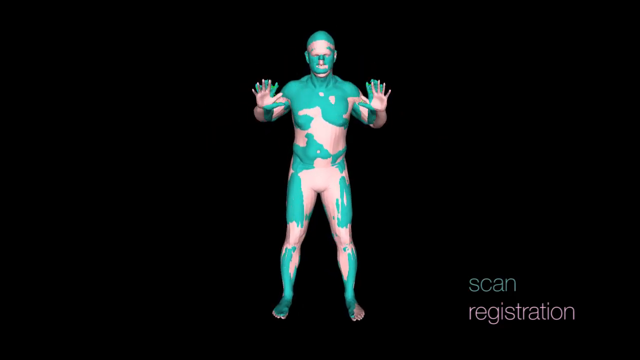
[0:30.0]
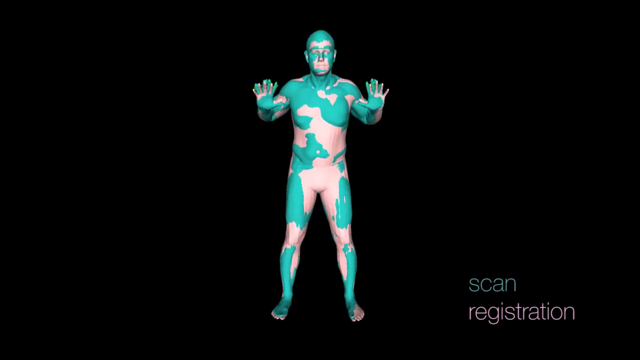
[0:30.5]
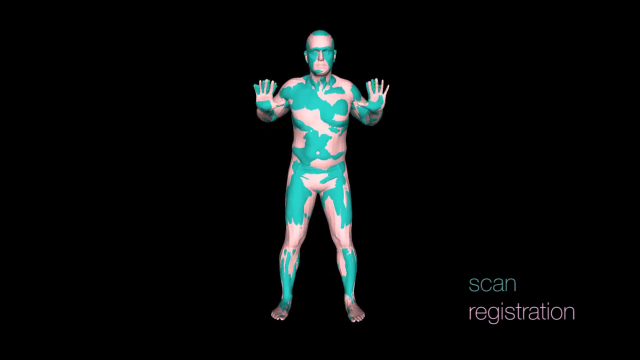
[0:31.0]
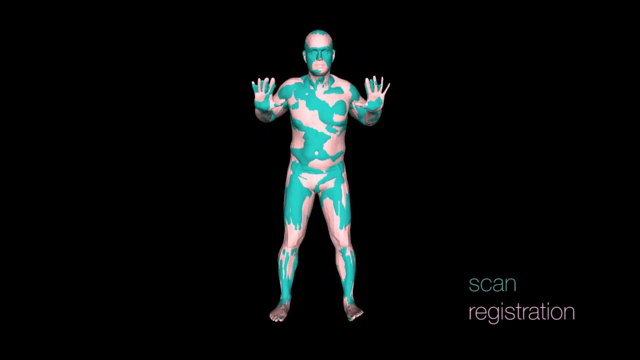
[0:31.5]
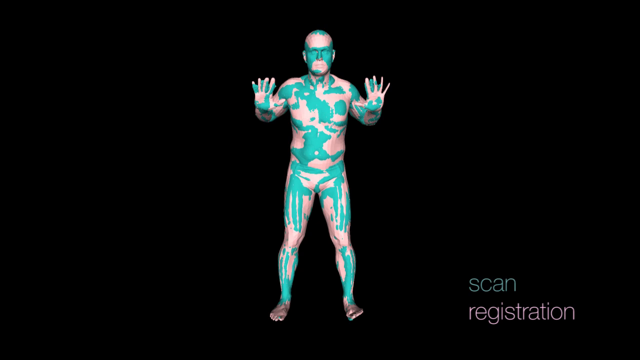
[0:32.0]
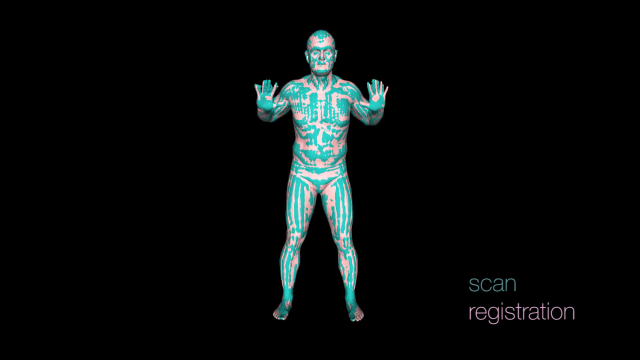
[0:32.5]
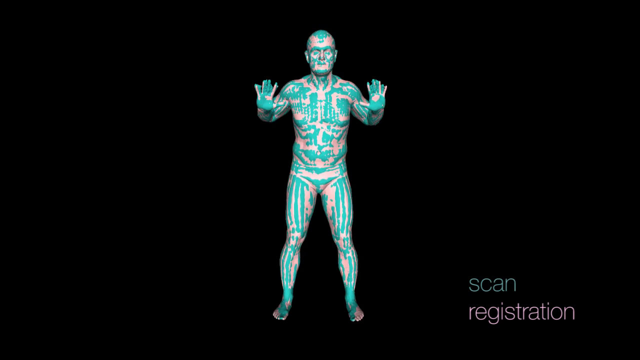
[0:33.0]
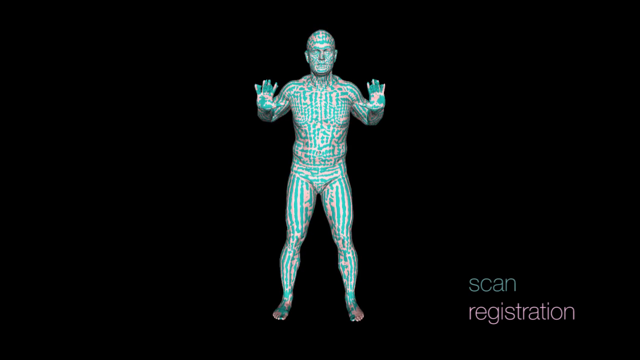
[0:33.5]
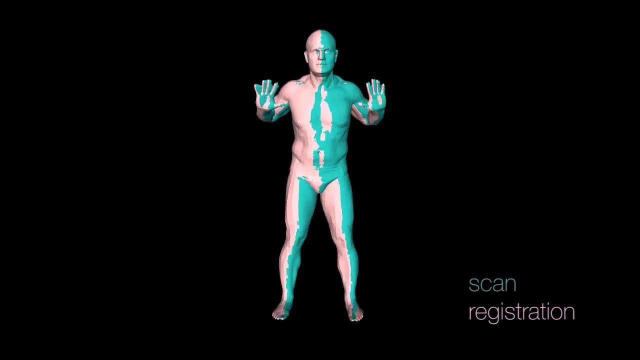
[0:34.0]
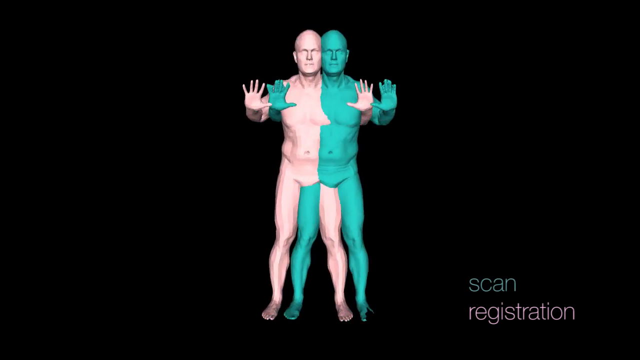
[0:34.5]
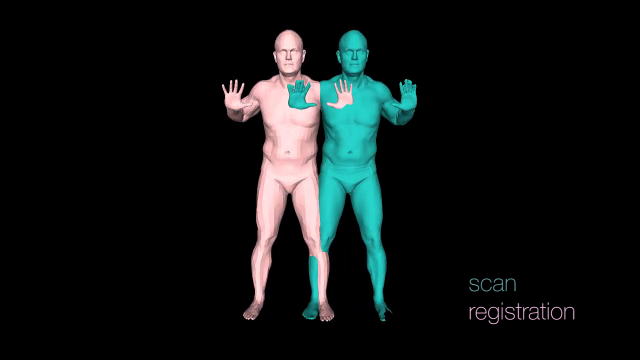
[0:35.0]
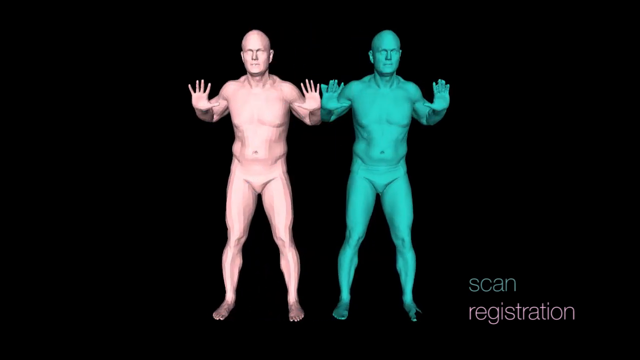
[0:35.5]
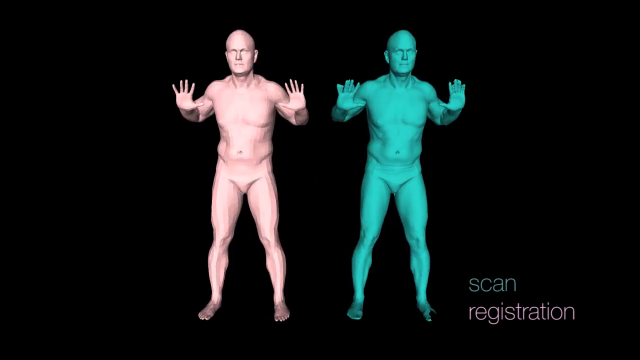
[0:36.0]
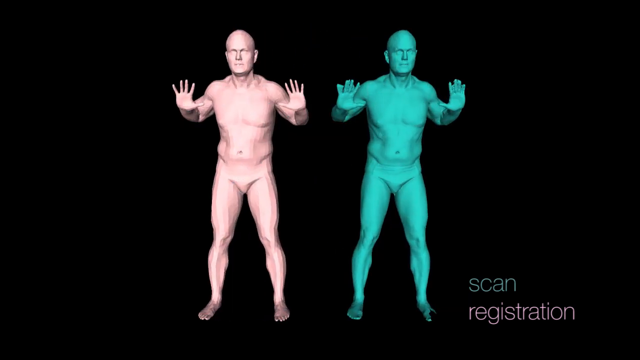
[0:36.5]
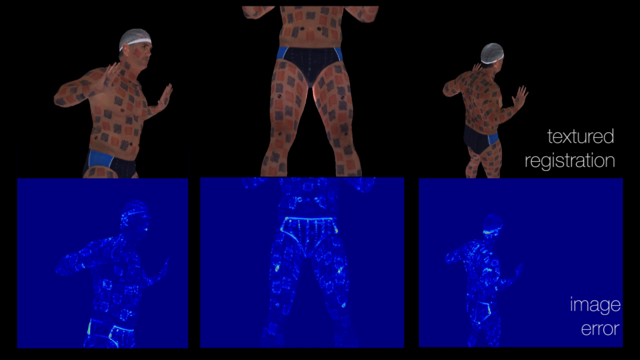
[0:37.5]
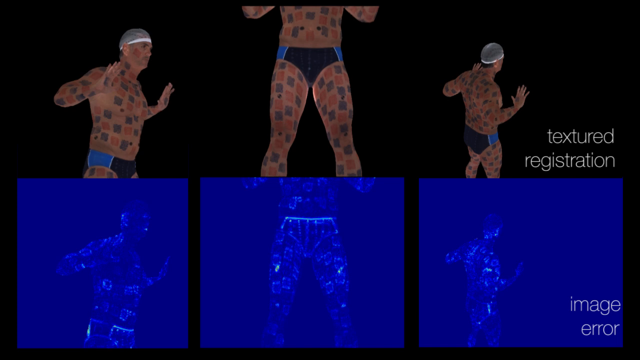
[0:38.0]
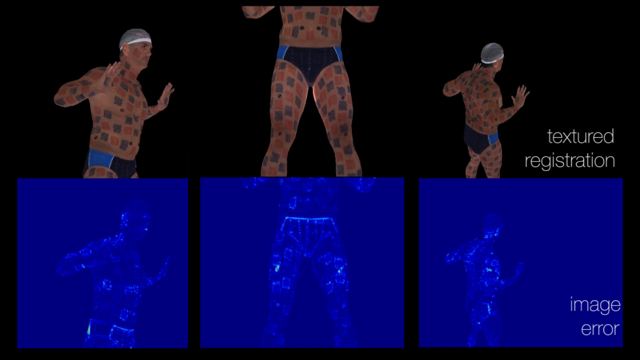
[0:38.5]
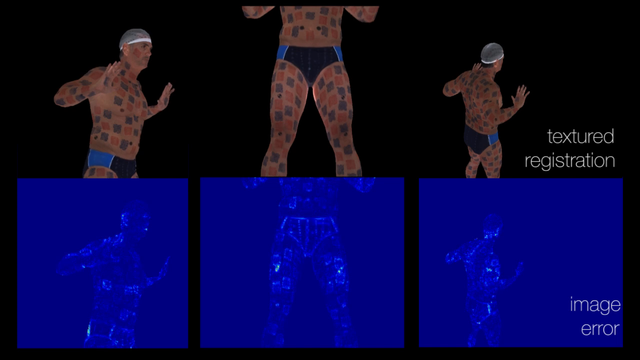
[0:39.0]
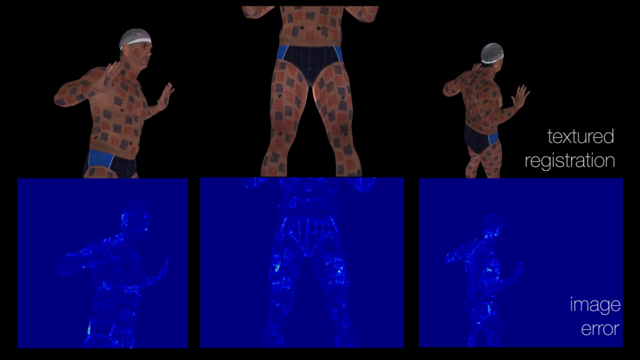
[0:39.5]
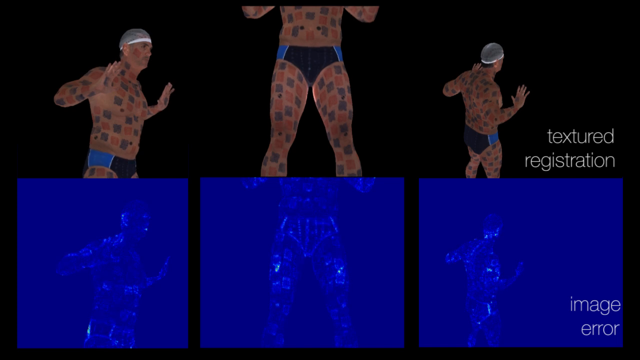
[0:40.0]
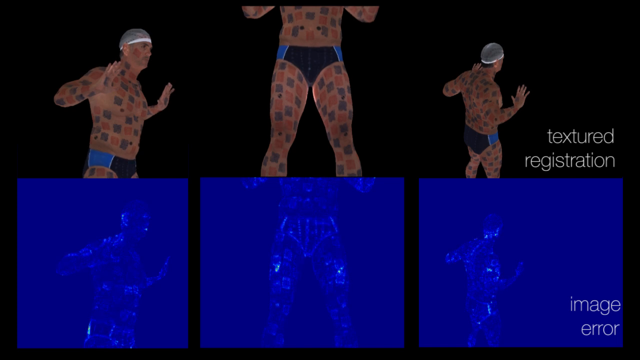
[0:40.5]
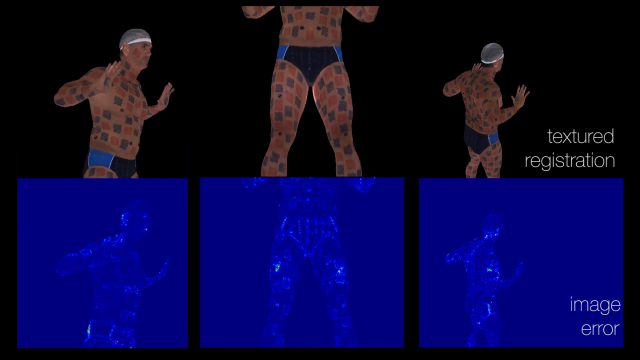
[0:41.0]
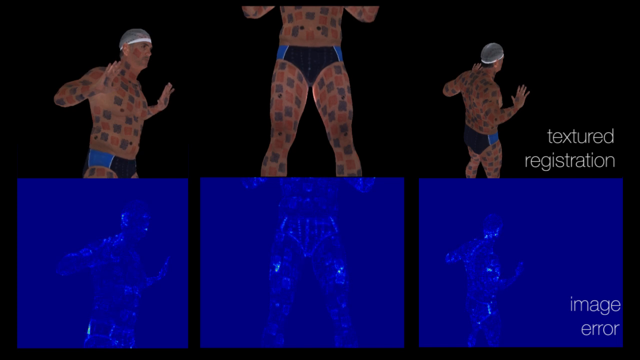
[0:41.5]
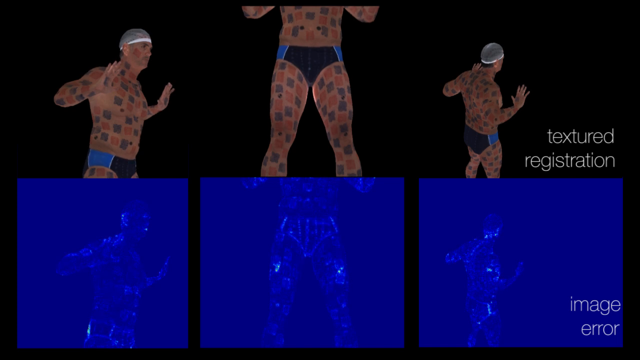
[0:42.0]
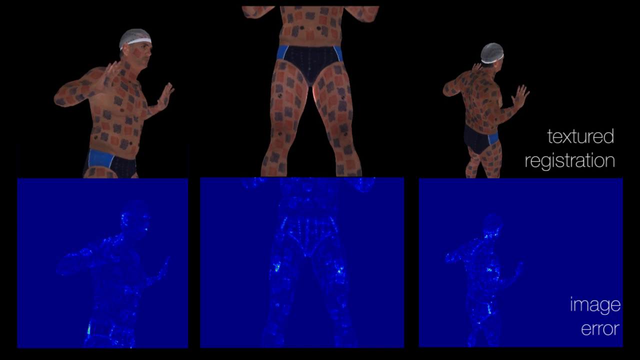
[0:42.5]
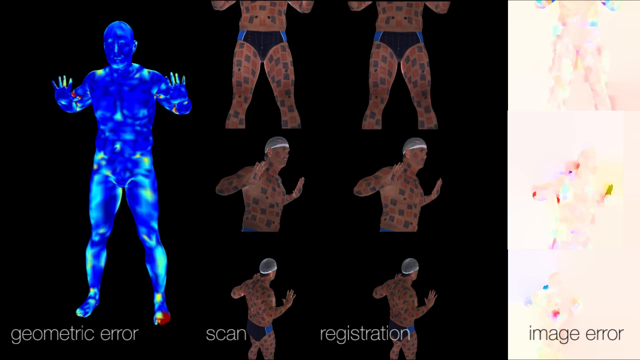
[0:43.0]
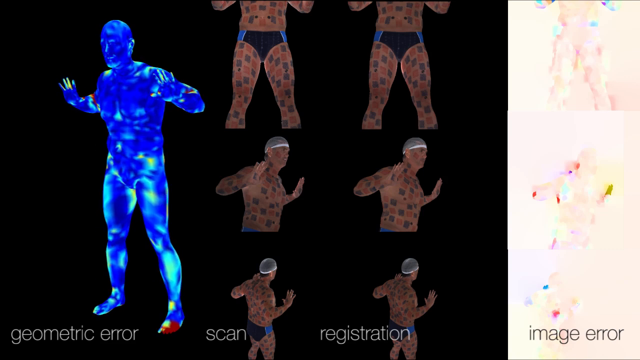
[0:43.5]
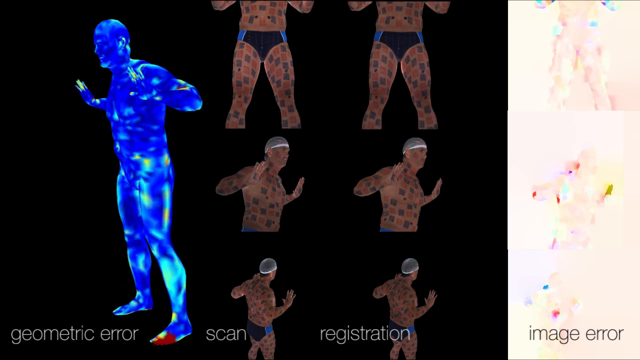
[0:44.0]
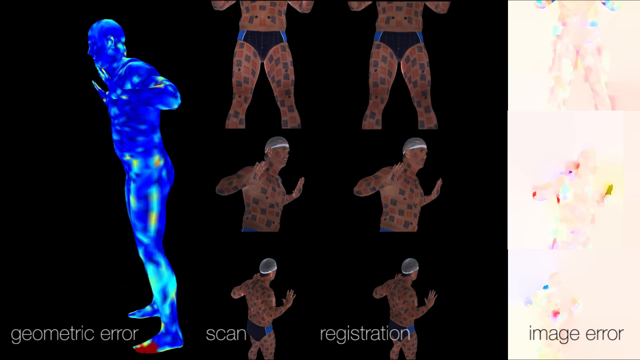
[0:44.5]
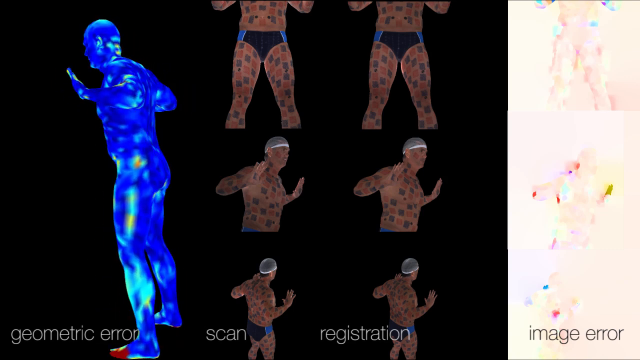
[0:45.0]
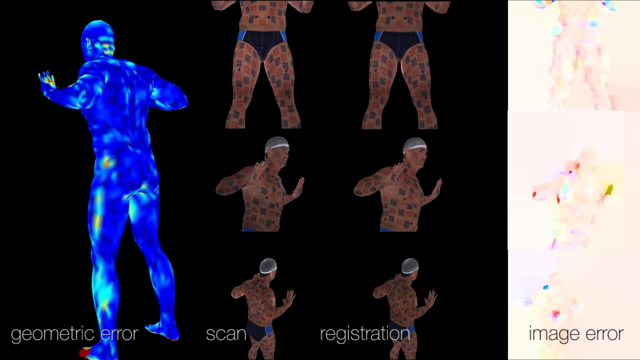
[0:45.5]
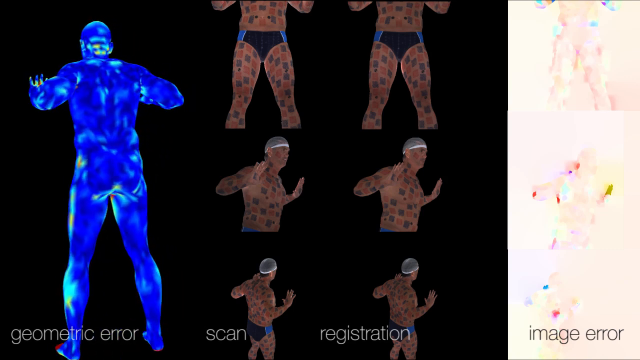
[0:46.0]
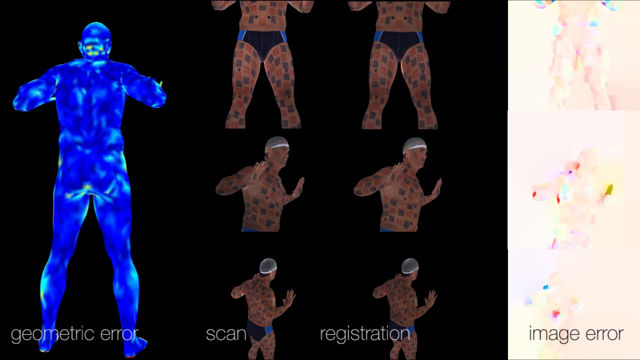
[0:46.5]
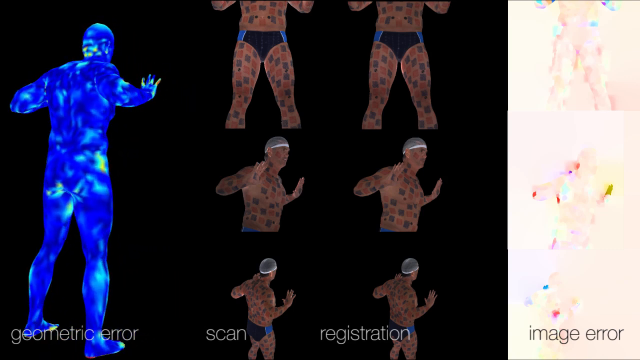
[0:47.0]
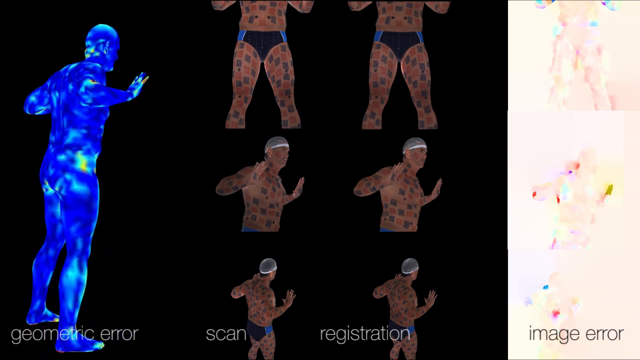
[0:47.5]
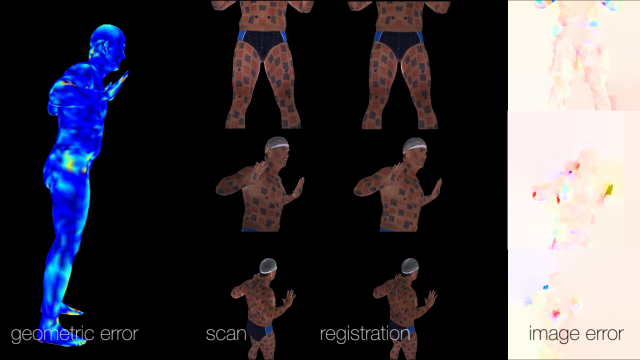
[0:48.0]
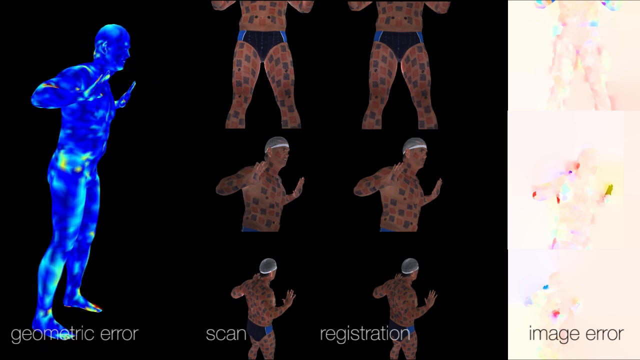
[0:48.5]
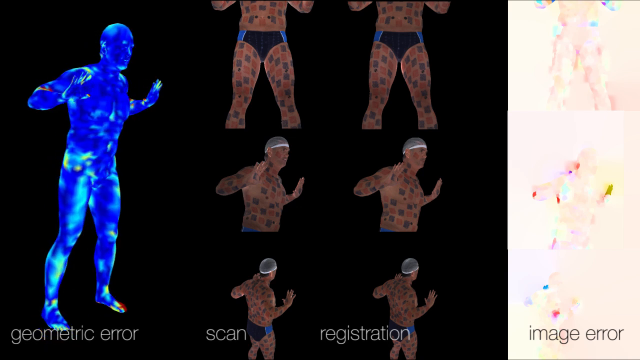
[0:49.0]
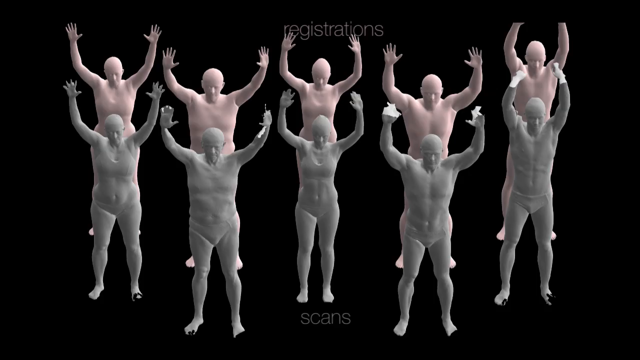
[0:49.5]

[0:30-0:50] The man, whose whole body is pink, is in front of blue headings. He is then separated into two, a blue person and a pink person, both with hands up and chests out, with some blue headings. Next, the man is subdivided into many features with spots all over his body, one view looking front and one looking back, and geometric signs are shown. Text appears on top, where the man has three bodies with spots on them. Underneath, the man is covered in blue lightning. The man is then shown in a geometric area, continuously rotating back and forth, while at his right-hand side there are six images of his body with spots in different positions, with different coloured spots facing different directions; one is labeled "scan" and the other "registration".